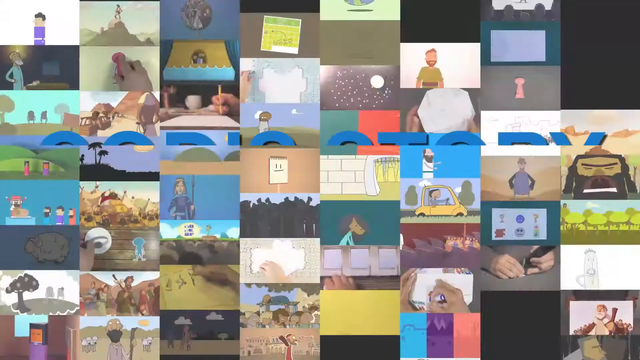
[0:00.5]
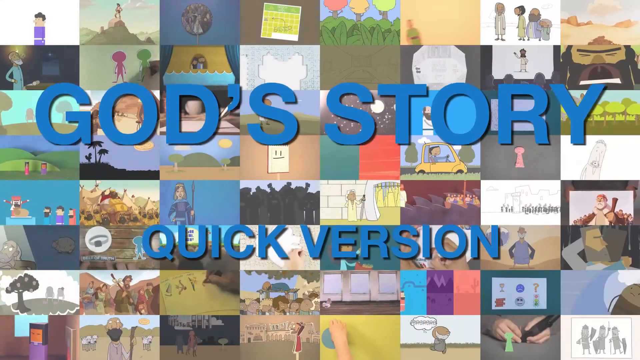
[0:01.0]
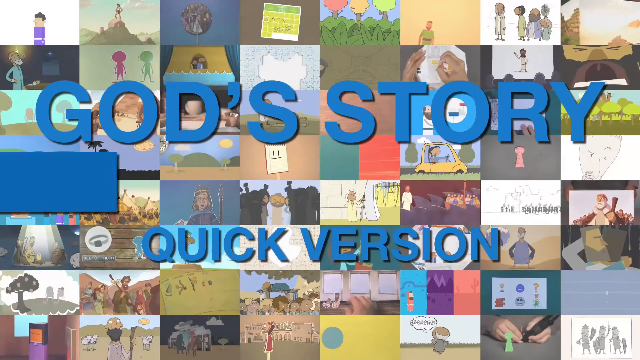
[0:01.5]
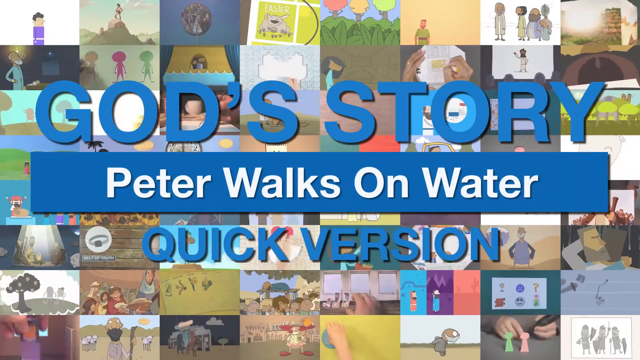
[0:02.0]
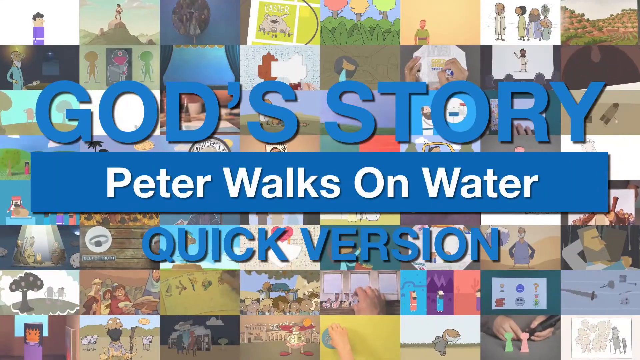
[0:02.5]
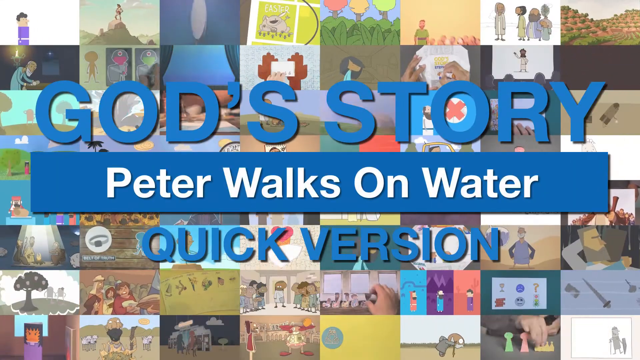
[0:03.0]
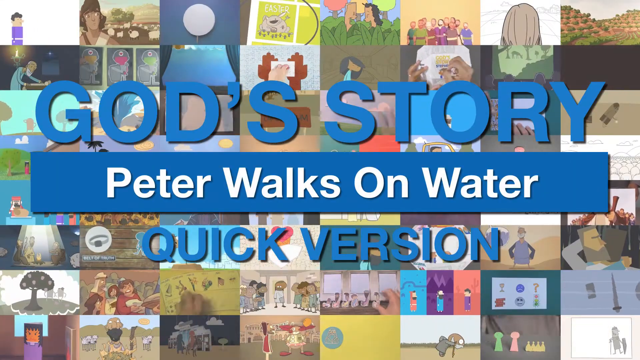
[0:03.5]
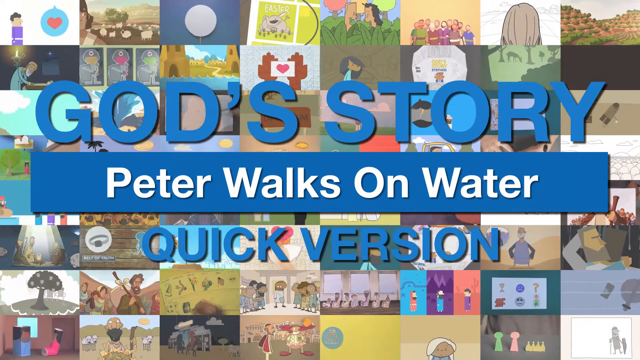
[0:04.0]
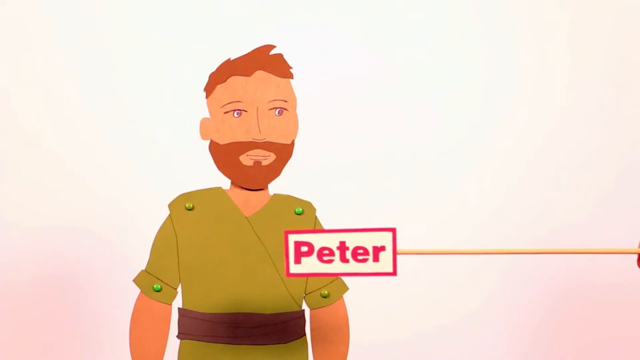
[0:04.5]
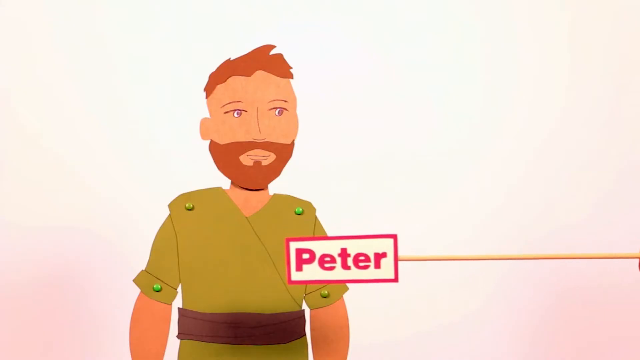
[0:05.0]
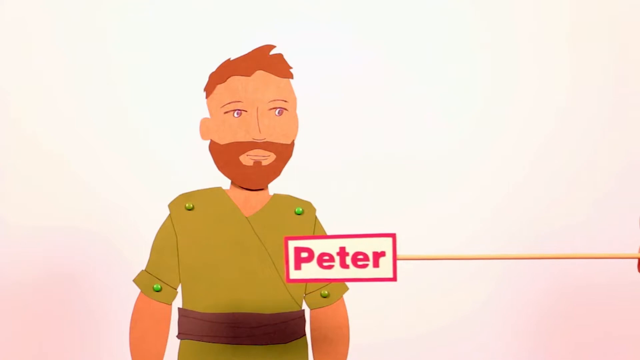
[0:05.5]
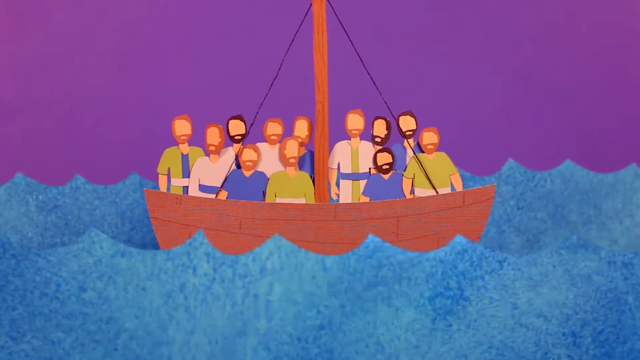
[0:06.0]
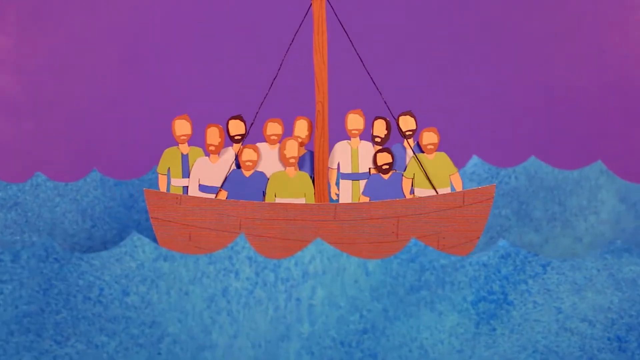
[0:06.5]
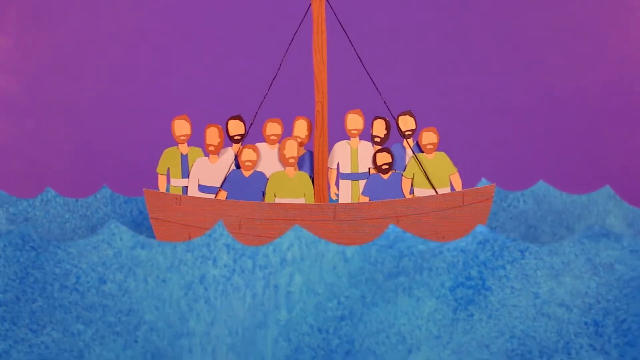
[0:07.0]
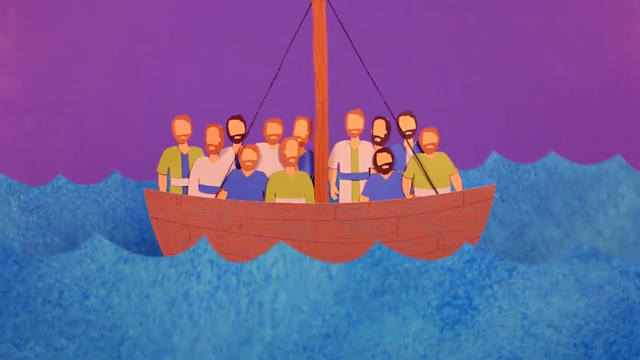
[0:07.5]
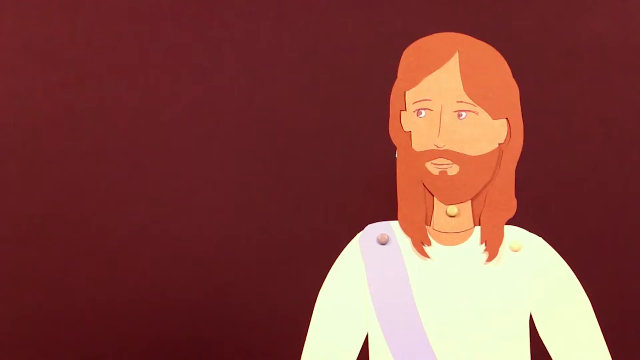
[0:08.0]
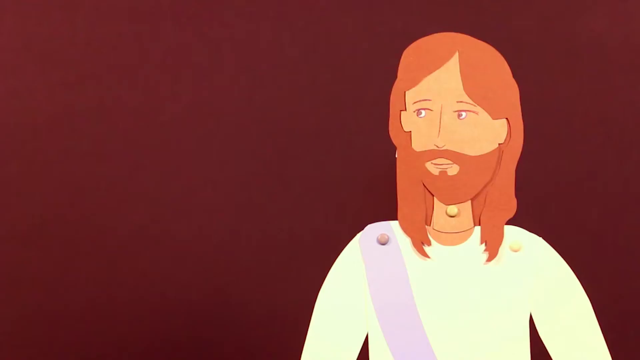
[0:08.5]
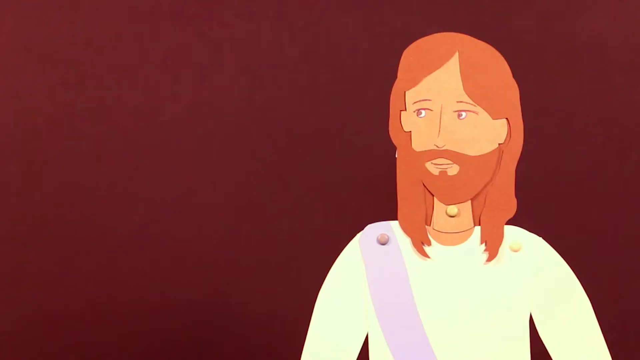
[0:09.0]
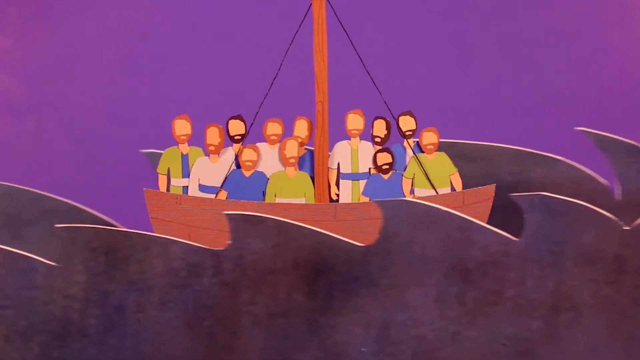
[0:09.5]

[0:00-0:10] A picture collage fills the background, and text in front reads "God's story Peter walks on water quick version." The video is a cartoon illustration. A cartoon image of Peter appears with his name in letters in front of him. A group of people in a boat sail on water; they are in a sailboat, but the sail is not raised, and they wear clothes of the type expected in biblical times. A person who looks like Jesus appears, and then the boat is shown again on the water, but the water has turned rough: instead of the calm-looking blue water they were sailing in at first, the water is dark and very ominous looking, and they are still sailing in the same boat.